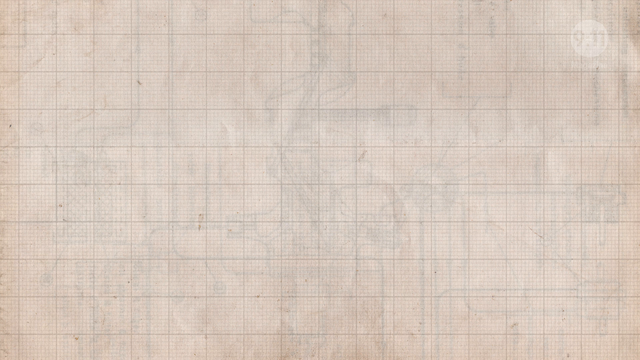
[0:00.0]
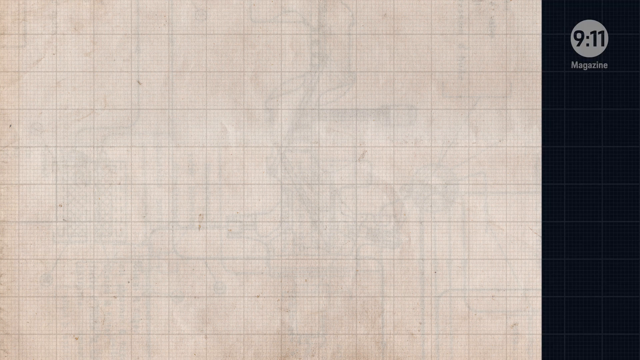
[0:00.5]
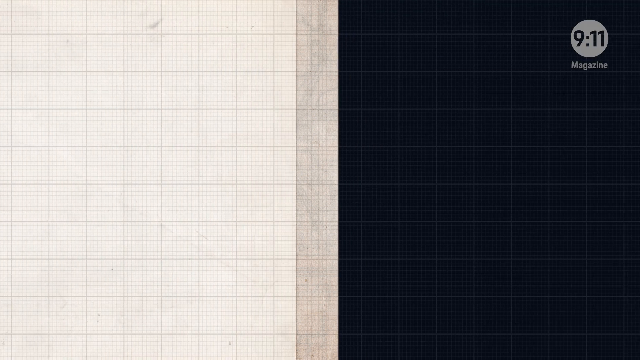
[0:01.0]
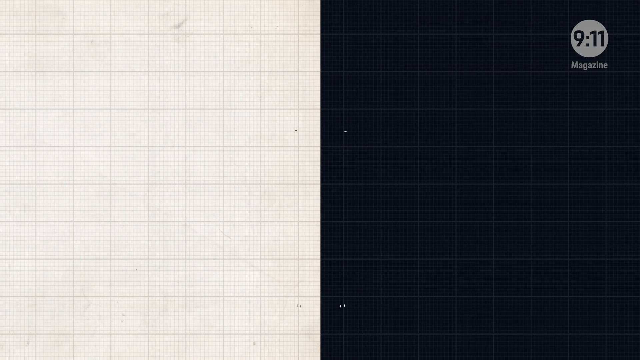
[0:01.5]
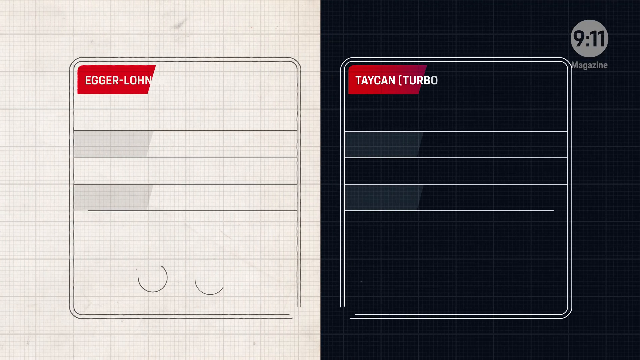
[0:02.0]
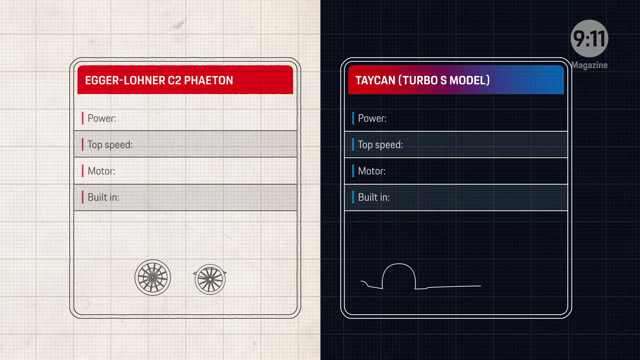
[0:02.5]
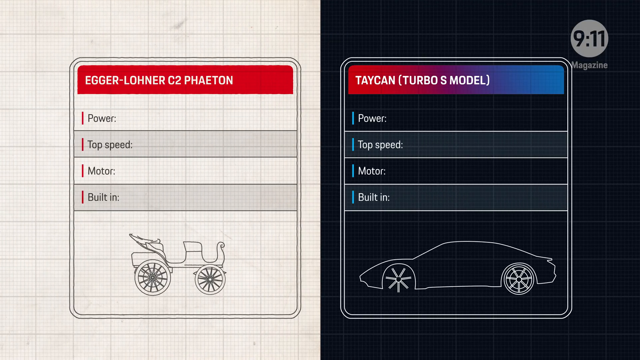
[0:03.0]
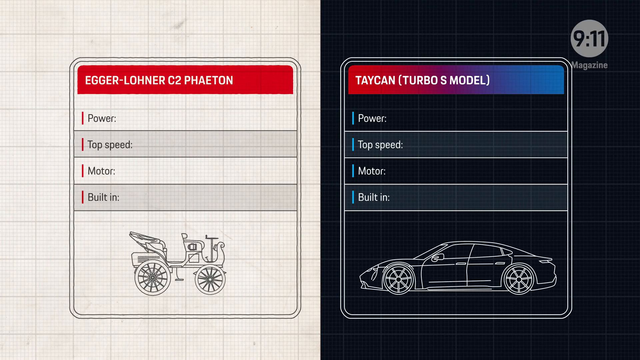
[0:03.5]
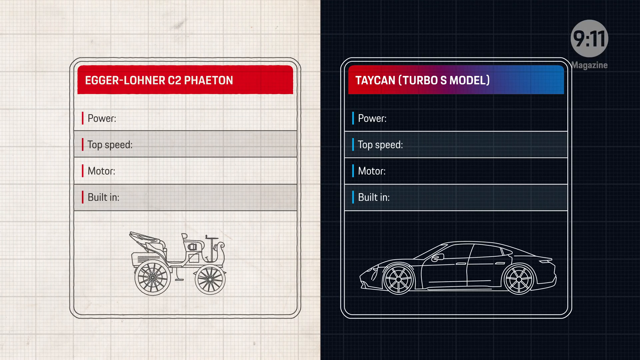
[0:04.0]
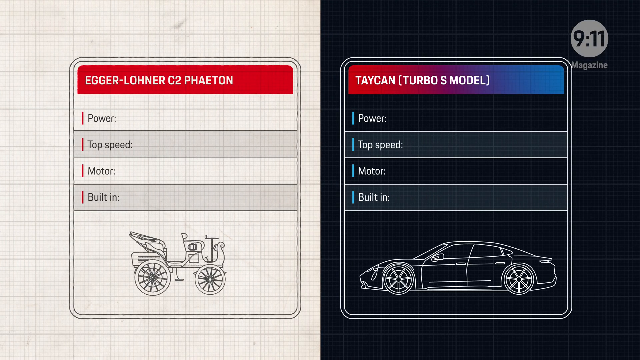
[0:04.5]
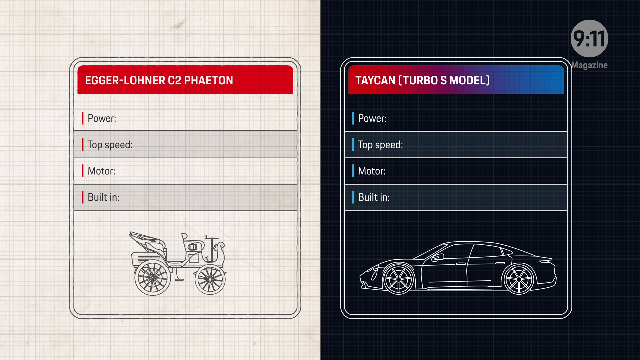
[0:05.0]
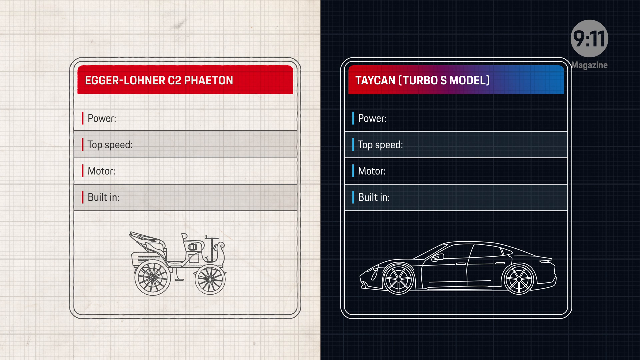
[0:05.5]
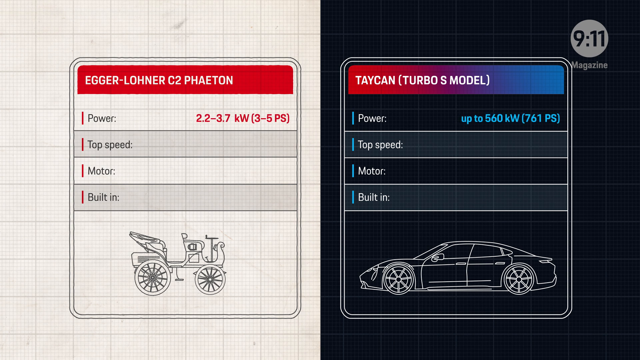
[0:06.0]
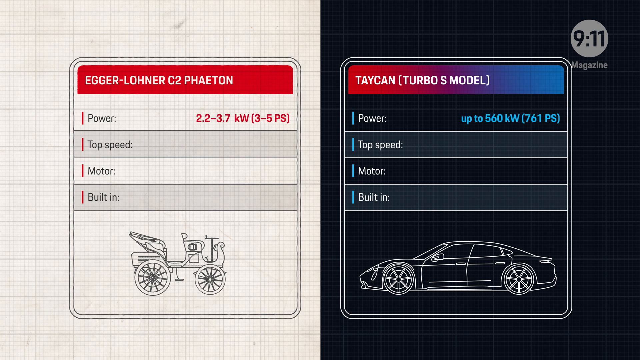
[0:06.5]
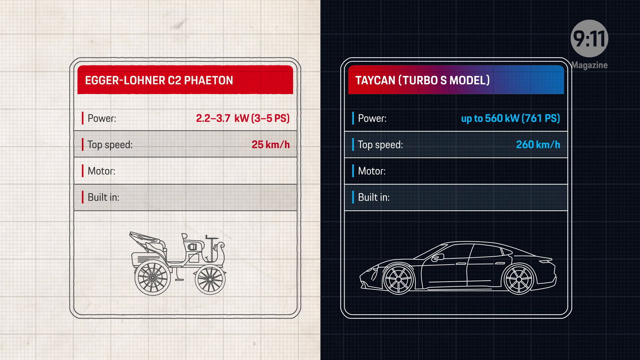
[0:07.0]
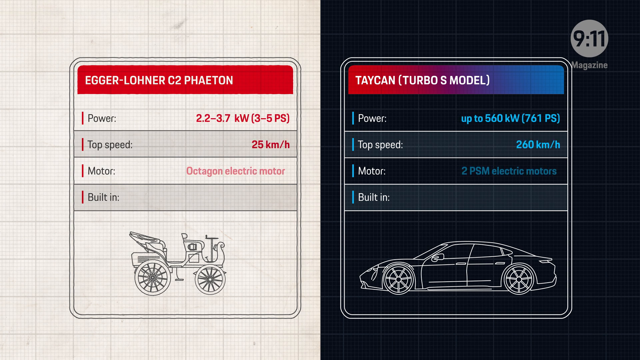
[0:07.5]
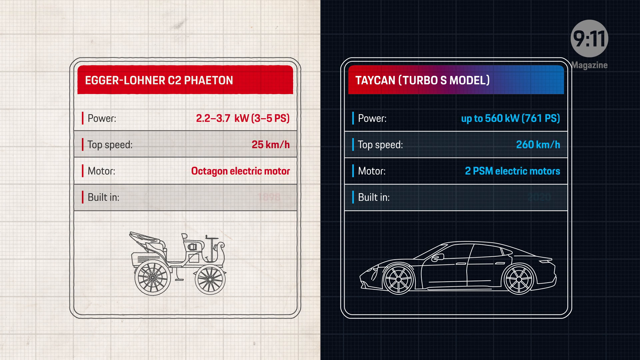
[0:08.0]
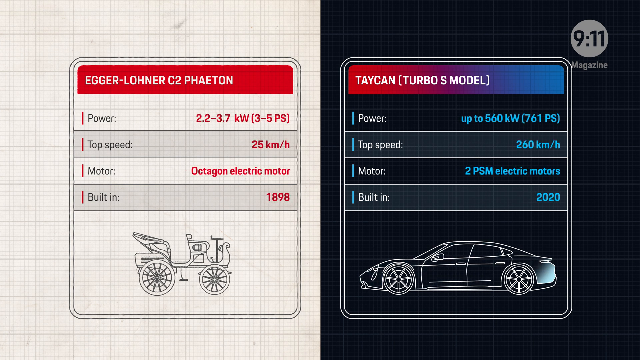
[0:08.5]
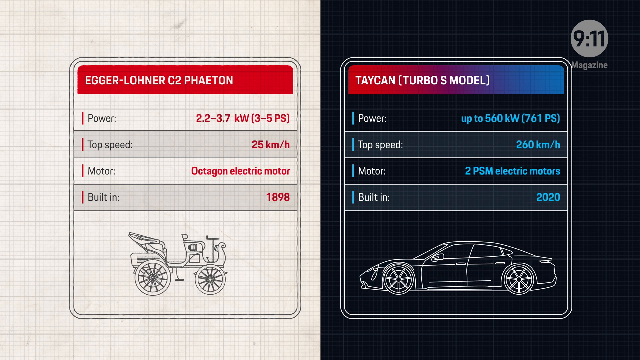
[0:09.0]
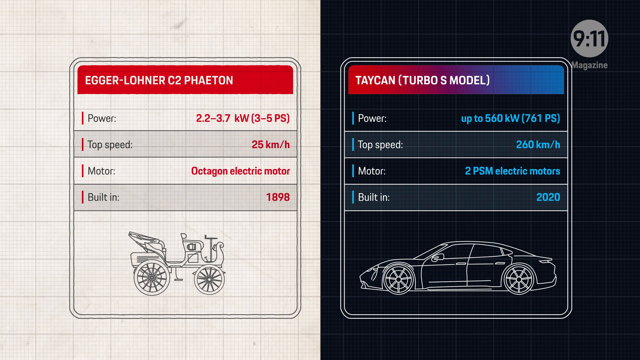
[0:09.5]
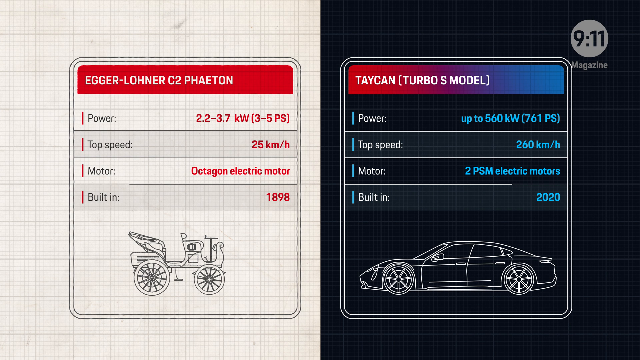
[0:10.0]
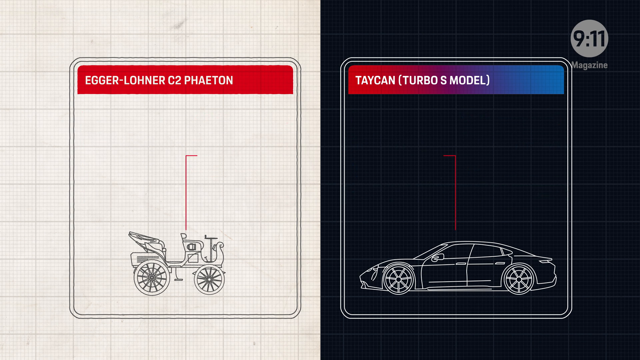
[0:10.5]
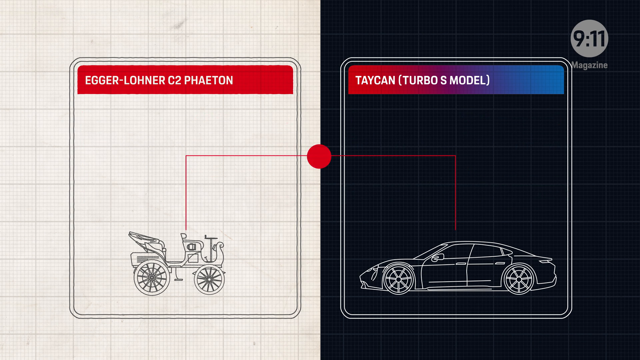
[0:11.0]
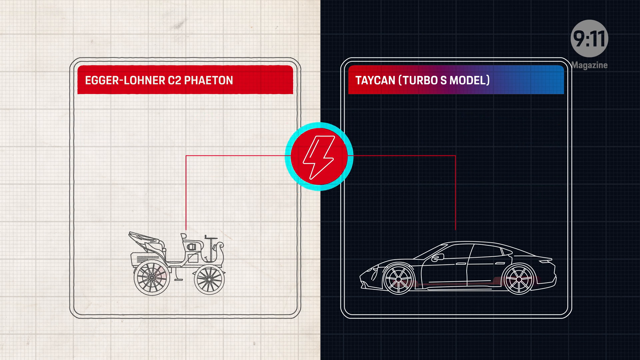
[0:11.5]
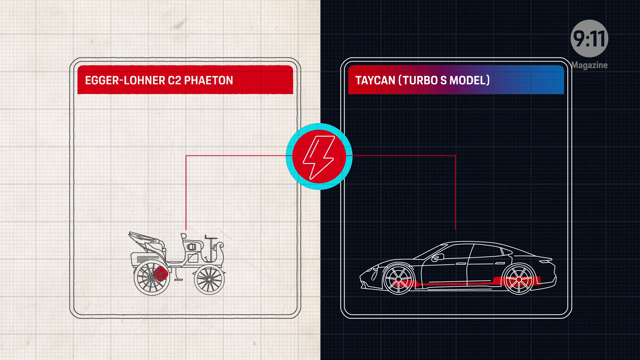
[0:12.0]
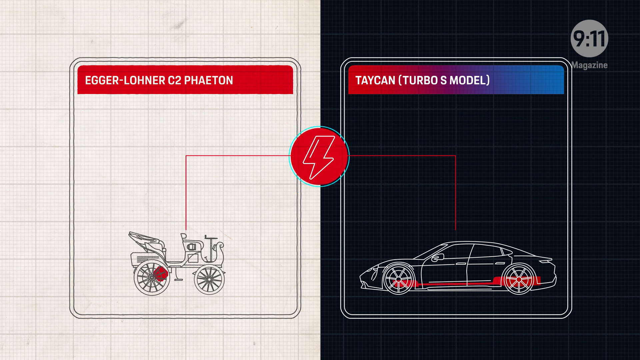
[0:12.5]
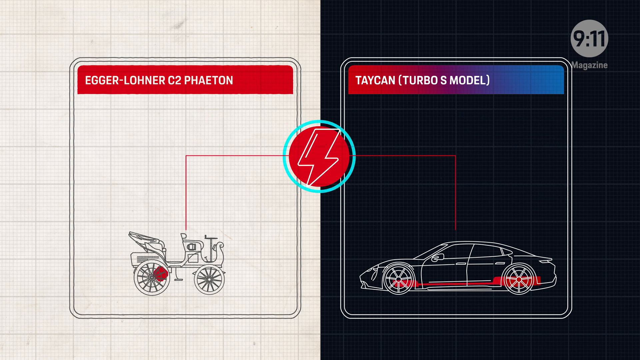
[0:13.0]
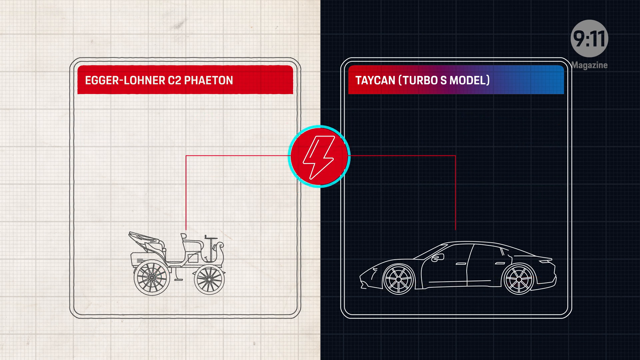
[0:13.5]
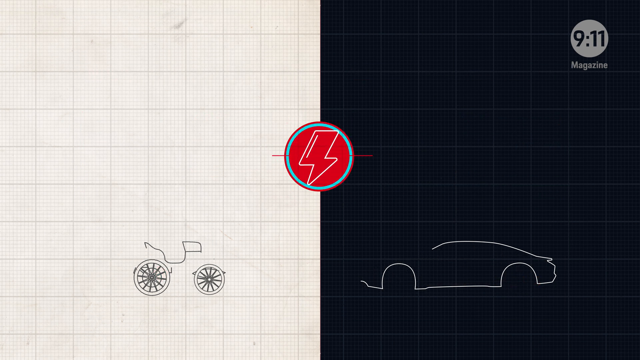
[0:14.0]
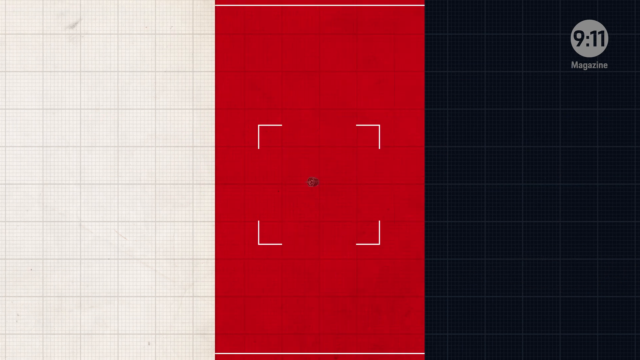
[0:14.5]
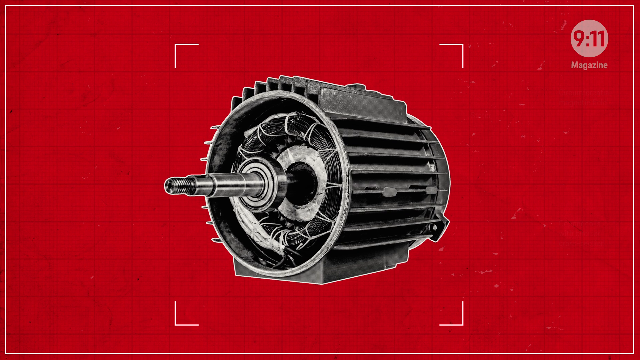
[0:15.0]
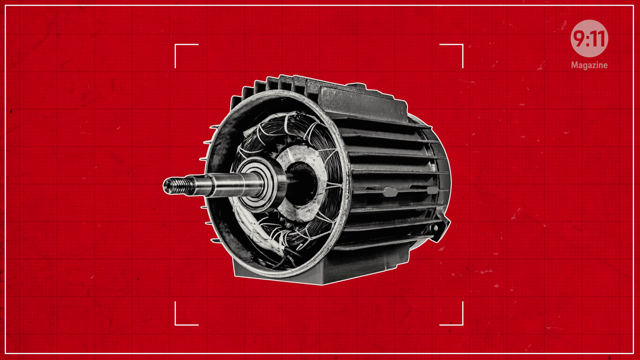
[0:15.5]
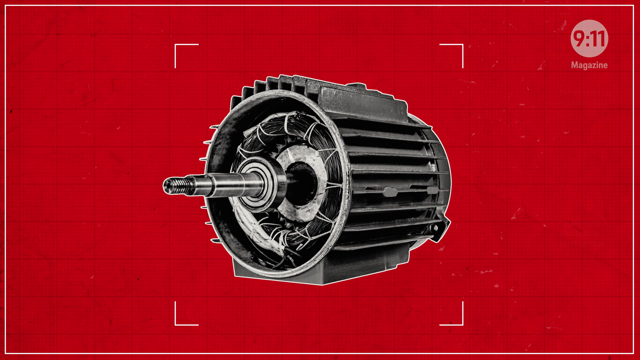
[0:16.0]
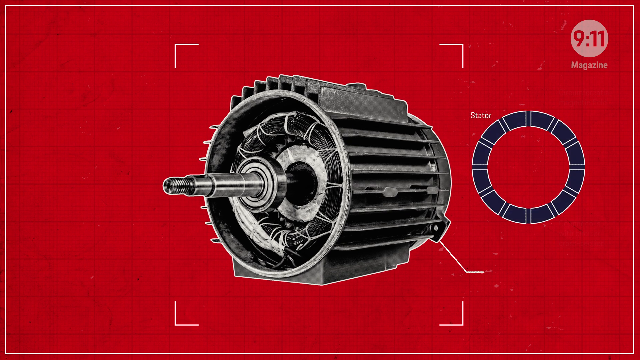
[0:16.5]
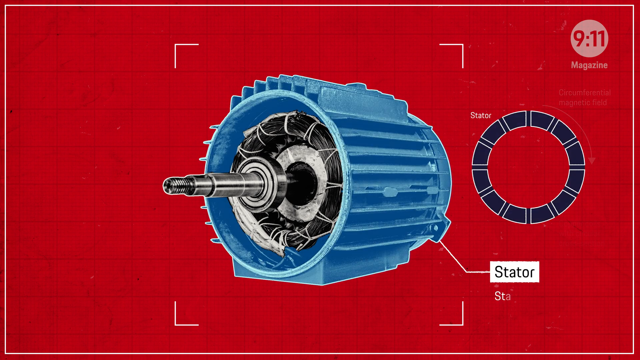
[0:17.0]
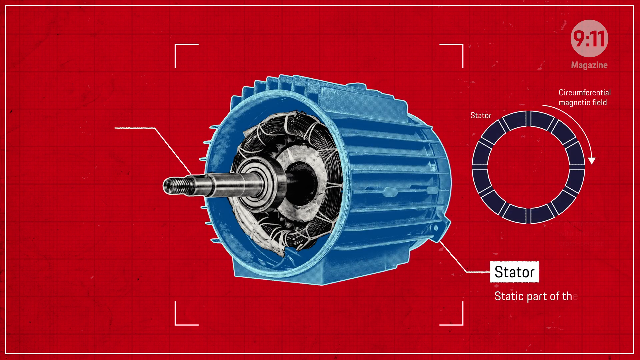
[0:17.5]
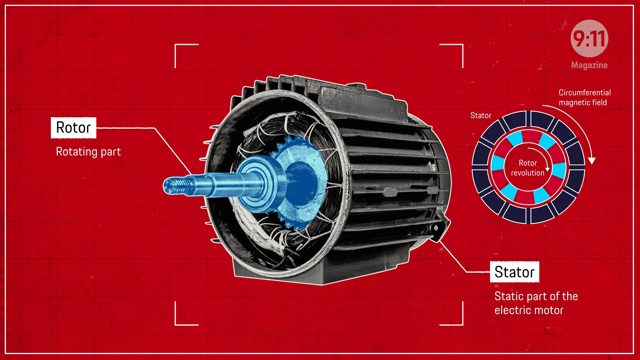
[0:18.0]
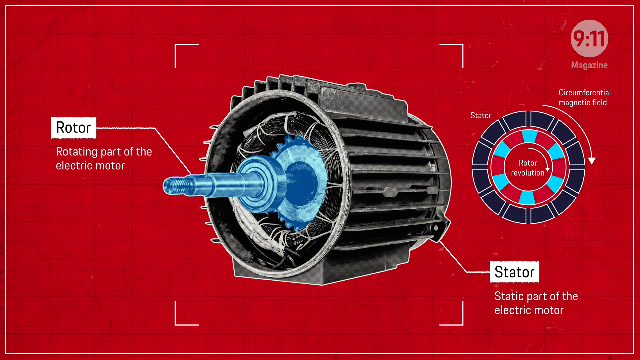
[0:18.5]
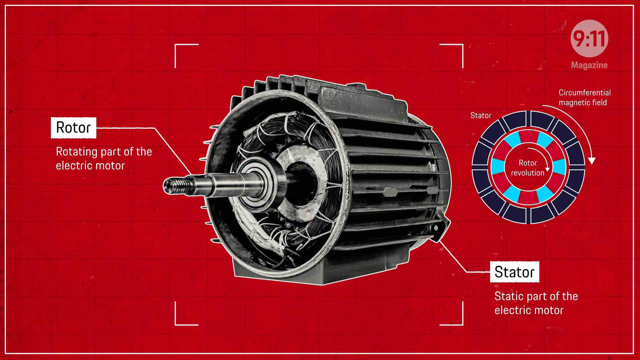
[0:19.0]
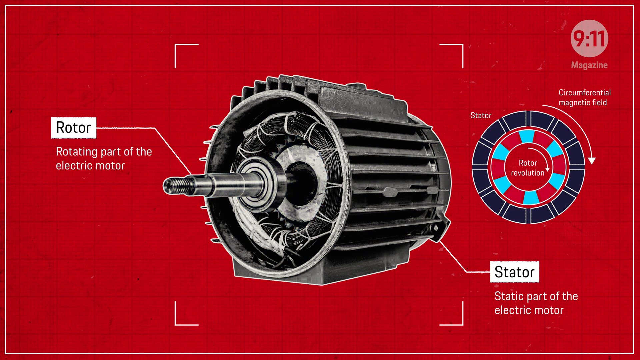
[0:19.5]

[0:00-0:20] Two different vehicles appear in the picture. The first has a power of 2.2 to 3.7 kilowatts, 3 to 5 PS, a top speed of 25 kilometers per hour, and an octagon electric motor, built in 1898. The second is the Taycan Turbo S model, with power up to 560 kilowatts (761 PS), a top speed of 260 kilometers per hour, and two PSM electric motors, built in 2020. The two differ in many things. A motor is then shown: the rotor is labeled as the rotating part of the electric motor, and the stator as the static part of the electric motor, along with a rotor revolution.